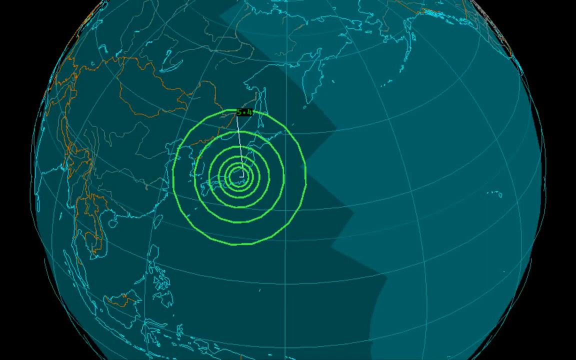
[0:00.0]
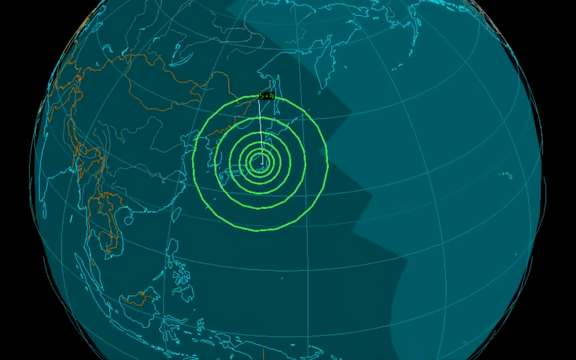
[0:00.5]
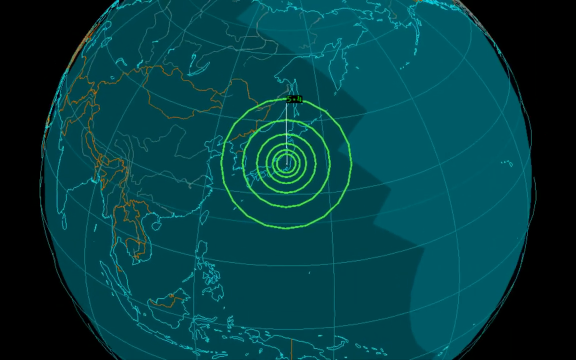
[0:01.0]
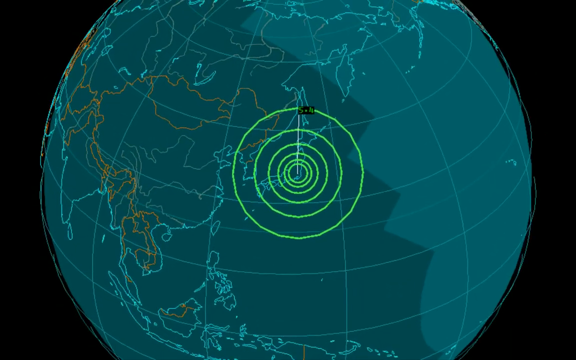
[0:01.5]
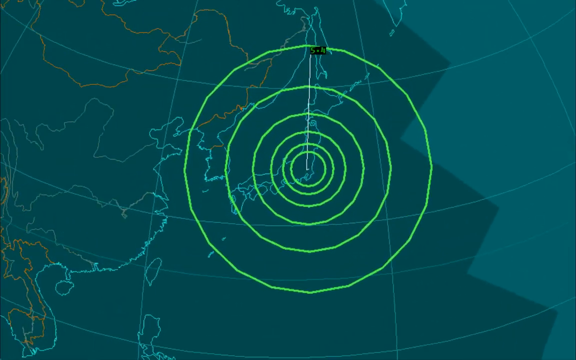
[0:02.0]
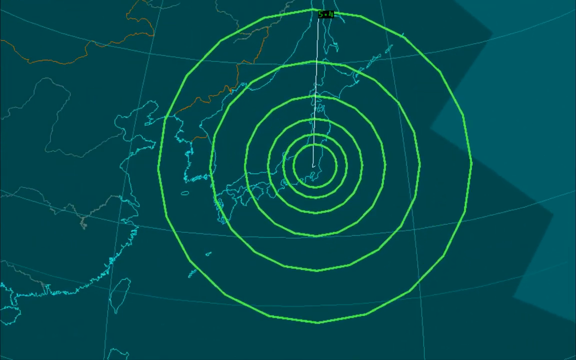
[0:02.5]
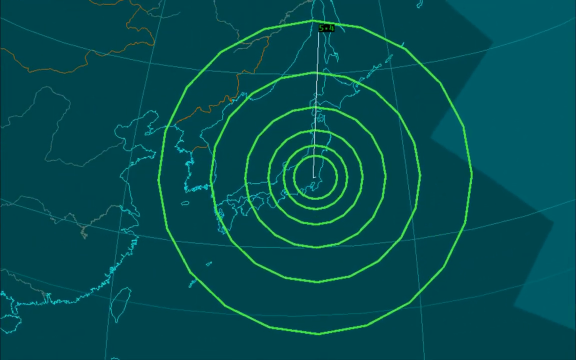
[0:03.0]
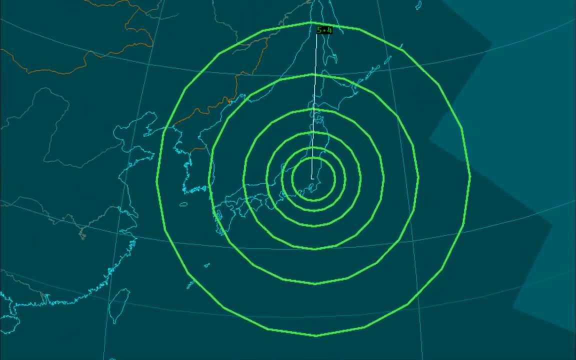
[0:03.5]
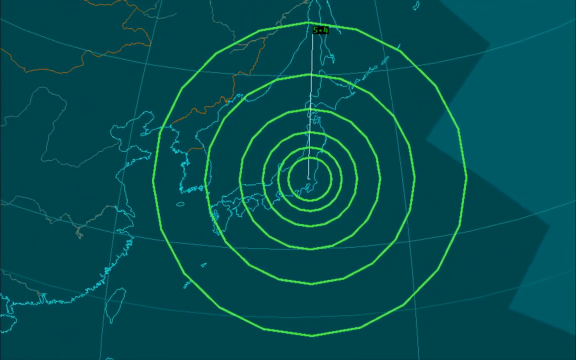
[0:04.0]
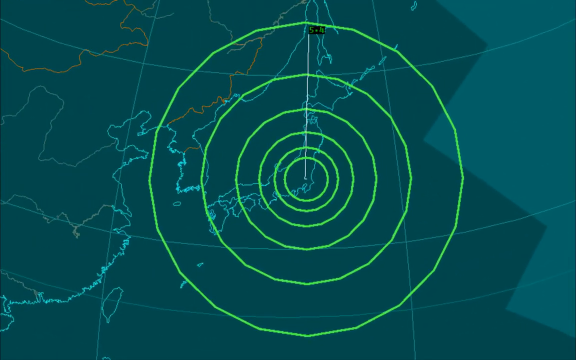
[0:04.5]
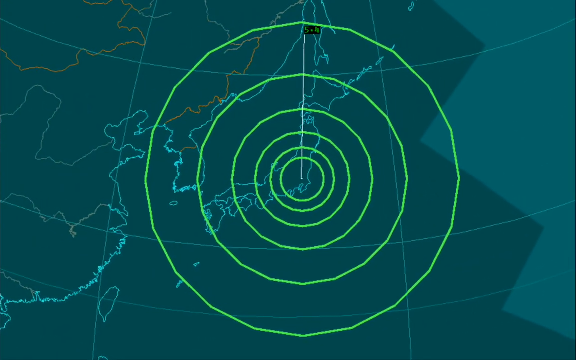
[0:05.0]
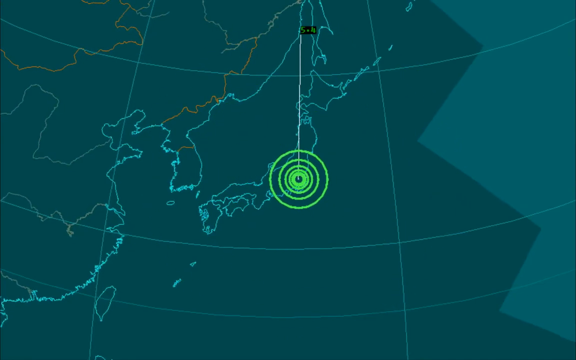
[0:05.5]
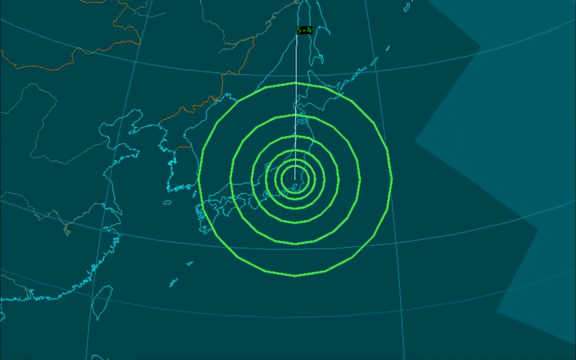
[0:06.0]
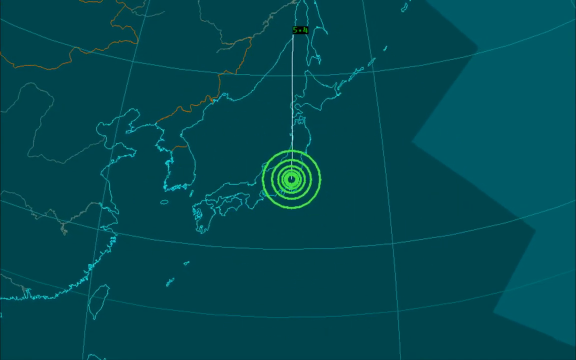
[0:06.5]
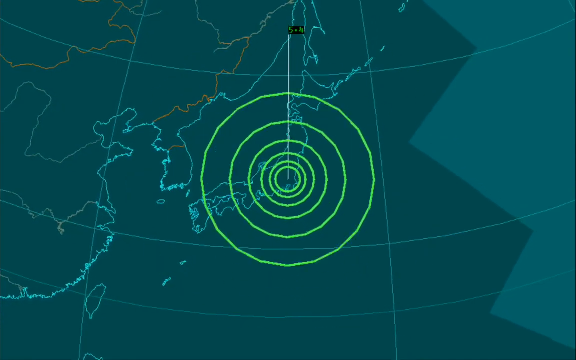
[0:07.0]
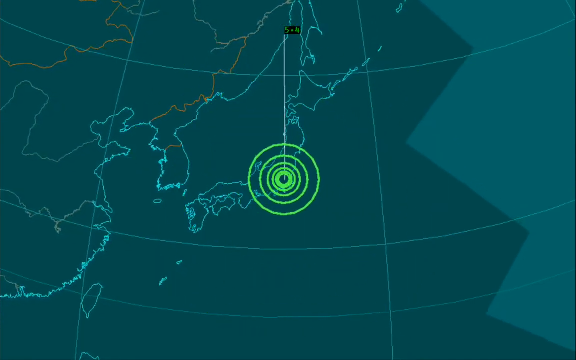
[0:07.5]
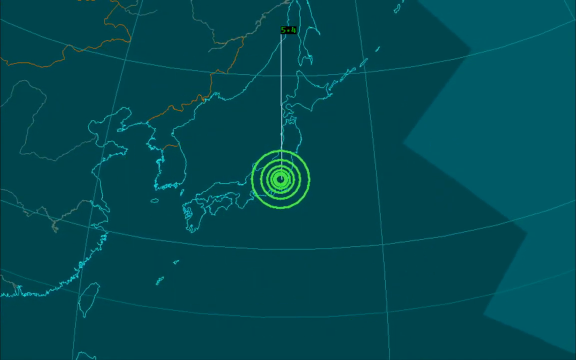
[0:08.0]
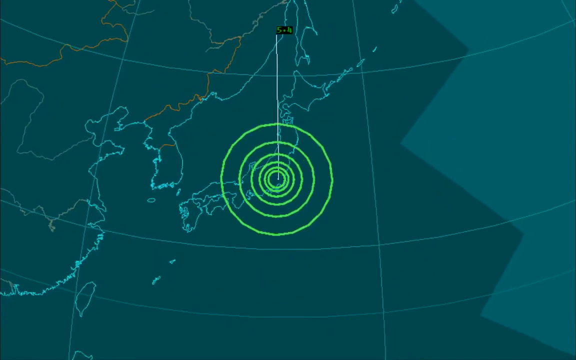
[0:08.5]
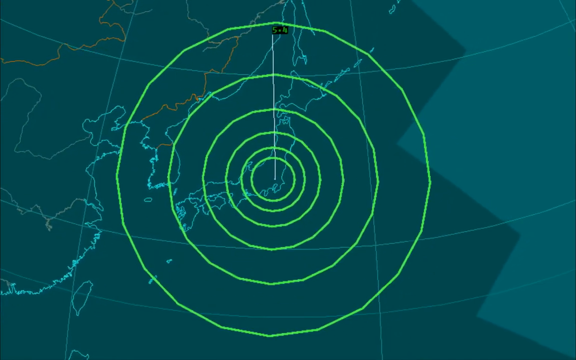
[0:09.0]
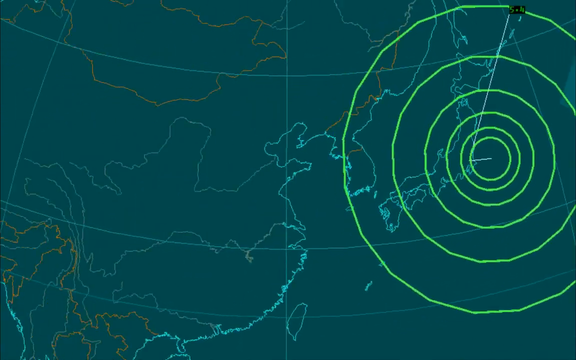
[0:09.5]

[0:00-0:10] A world map is shown, with something highlighted on it. It is unclear which part of the world the map shows or what the highlighted indicator represents.